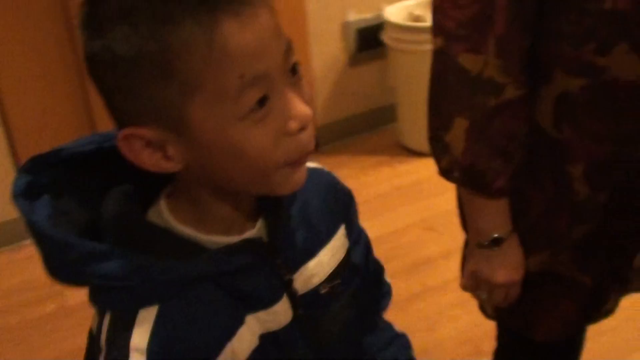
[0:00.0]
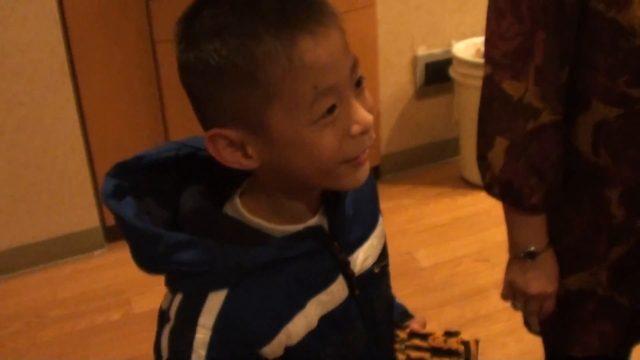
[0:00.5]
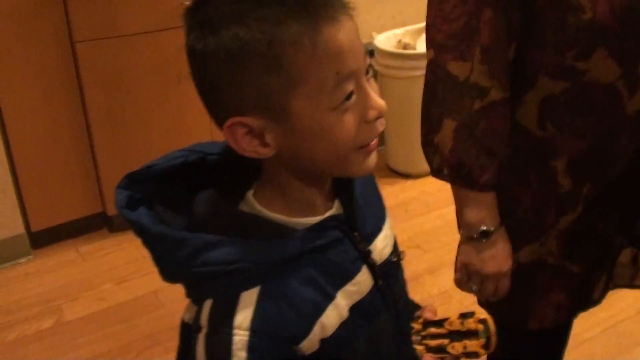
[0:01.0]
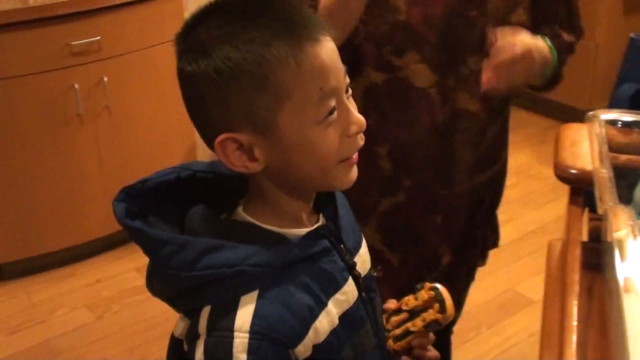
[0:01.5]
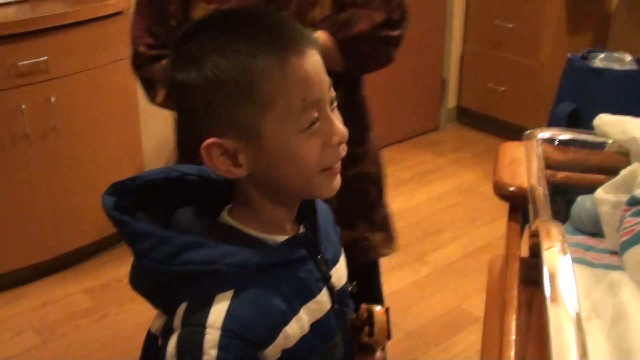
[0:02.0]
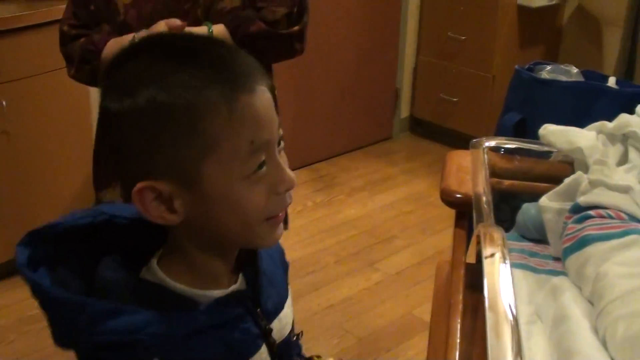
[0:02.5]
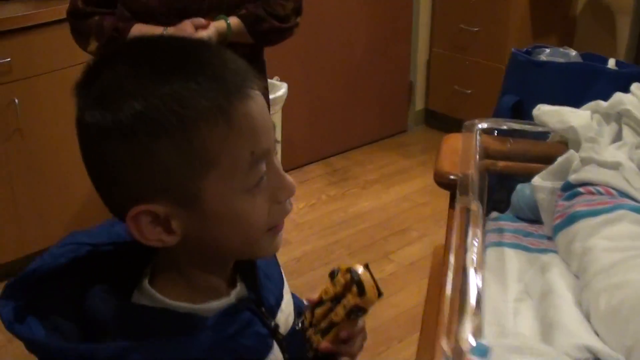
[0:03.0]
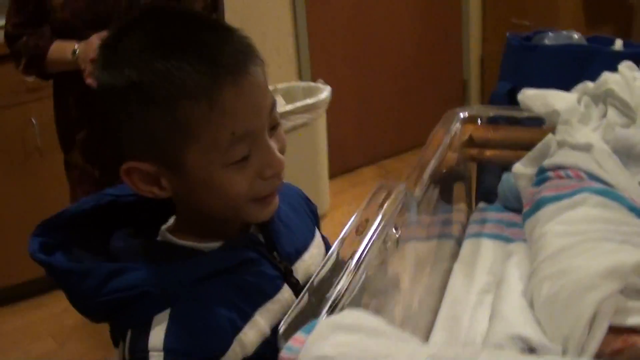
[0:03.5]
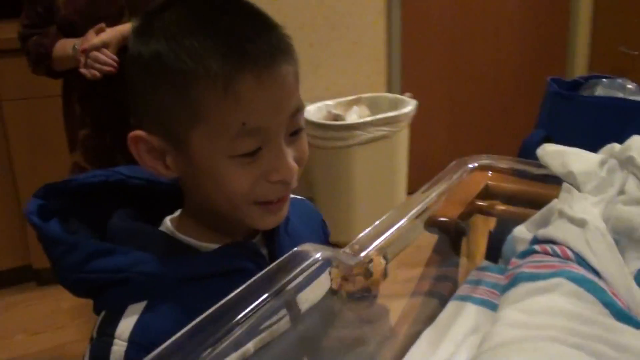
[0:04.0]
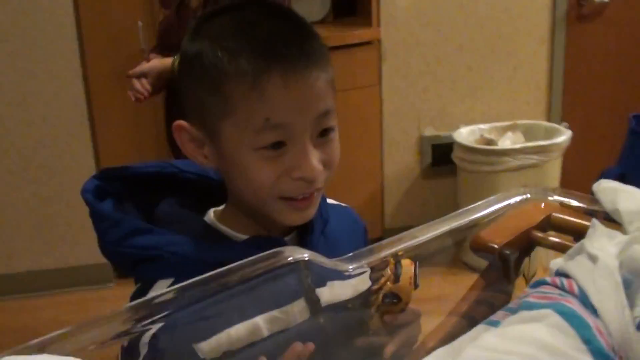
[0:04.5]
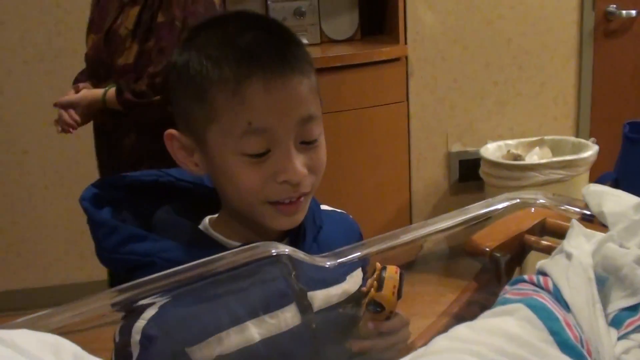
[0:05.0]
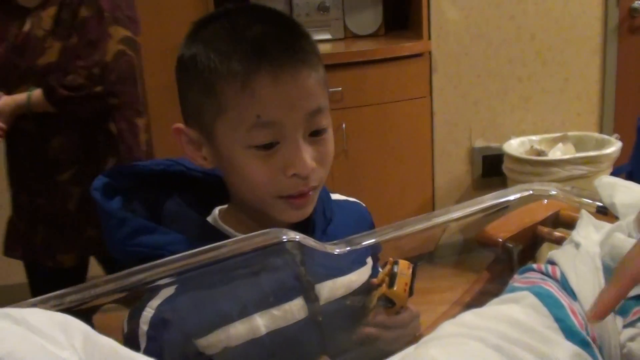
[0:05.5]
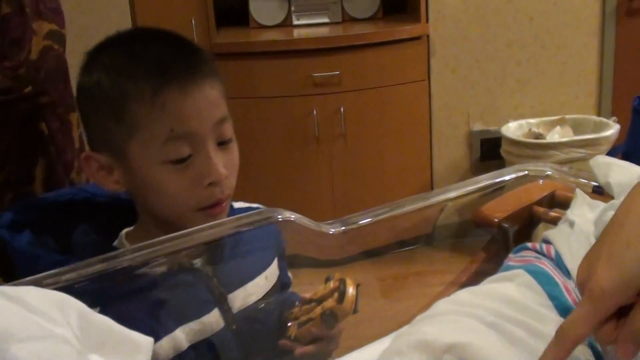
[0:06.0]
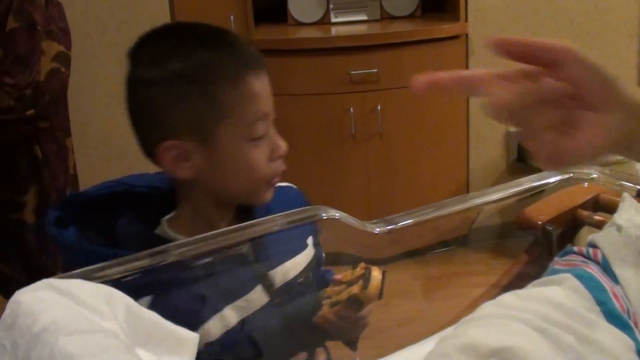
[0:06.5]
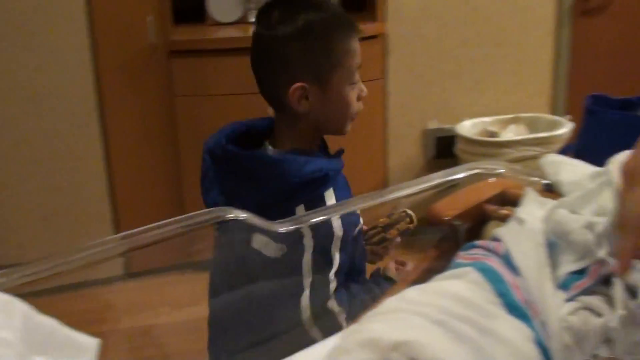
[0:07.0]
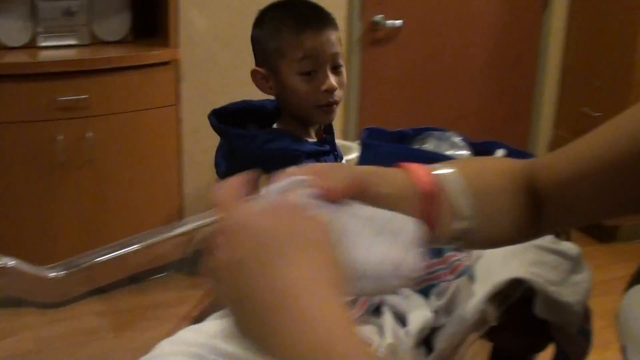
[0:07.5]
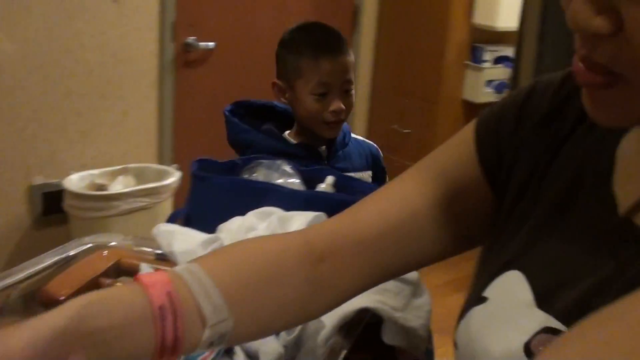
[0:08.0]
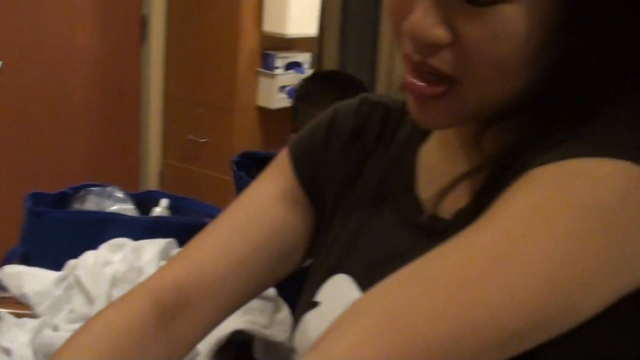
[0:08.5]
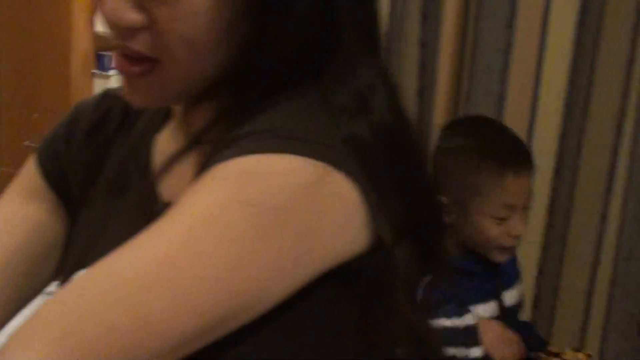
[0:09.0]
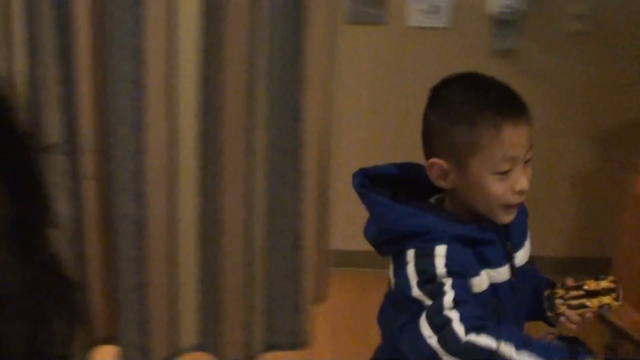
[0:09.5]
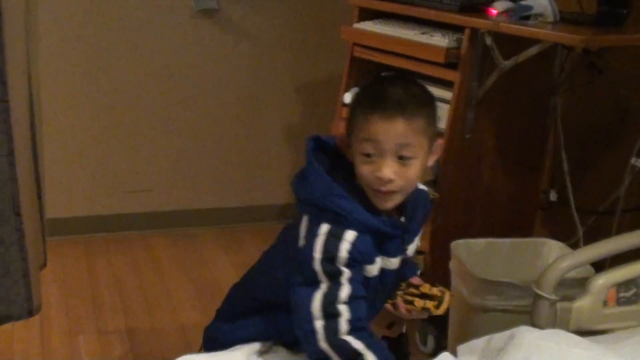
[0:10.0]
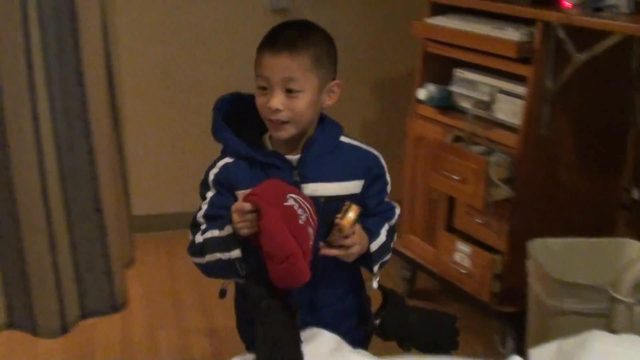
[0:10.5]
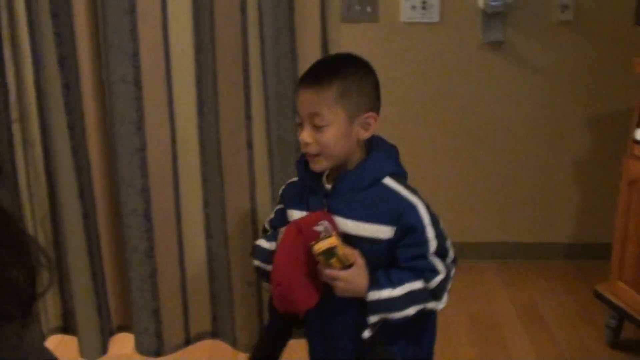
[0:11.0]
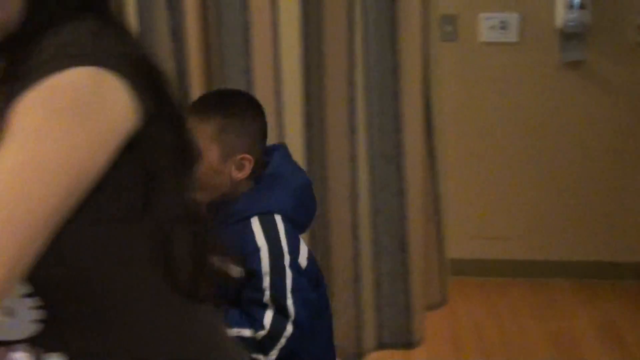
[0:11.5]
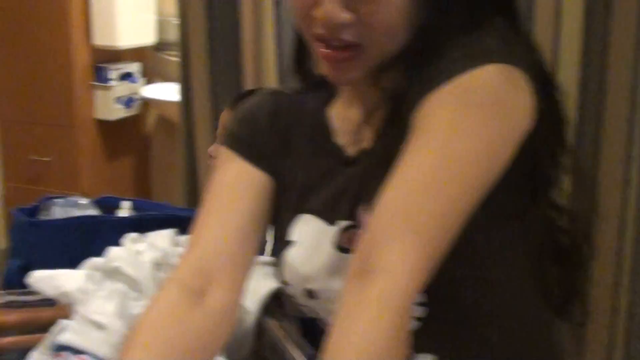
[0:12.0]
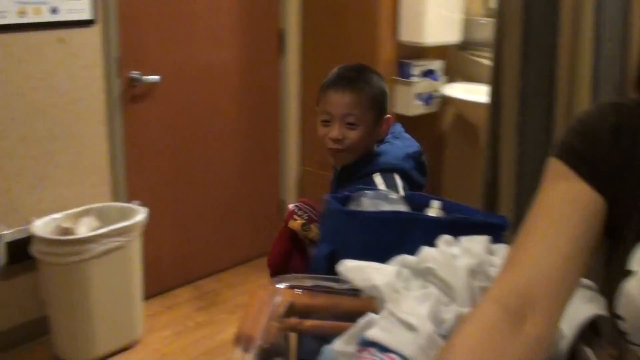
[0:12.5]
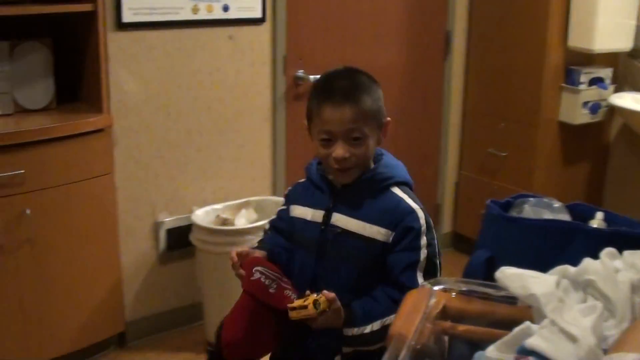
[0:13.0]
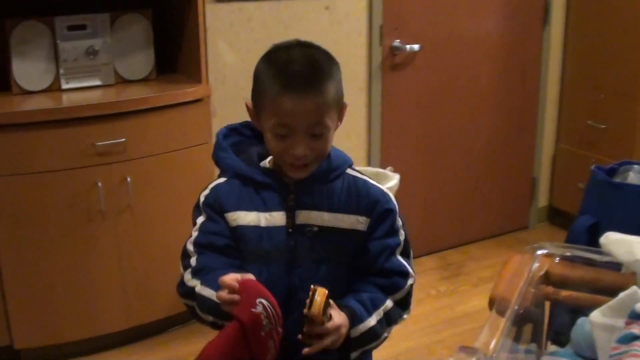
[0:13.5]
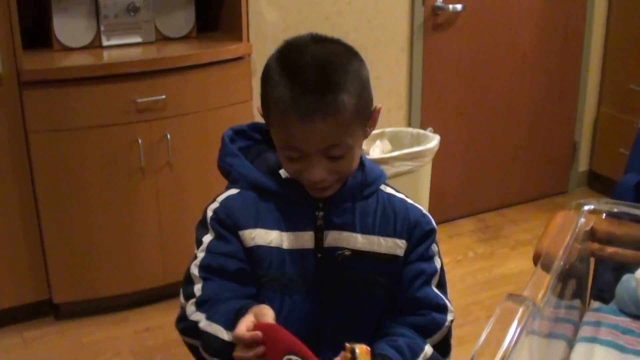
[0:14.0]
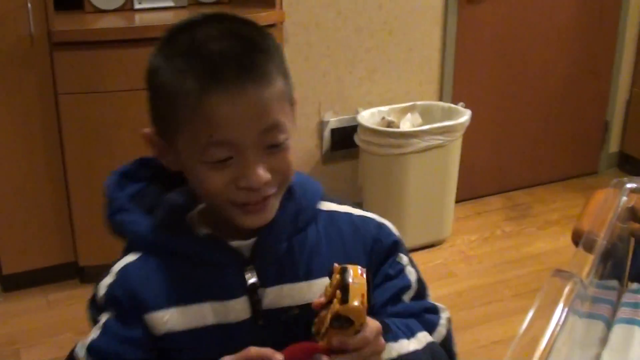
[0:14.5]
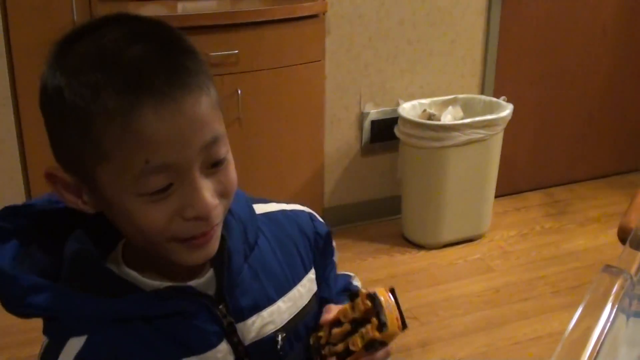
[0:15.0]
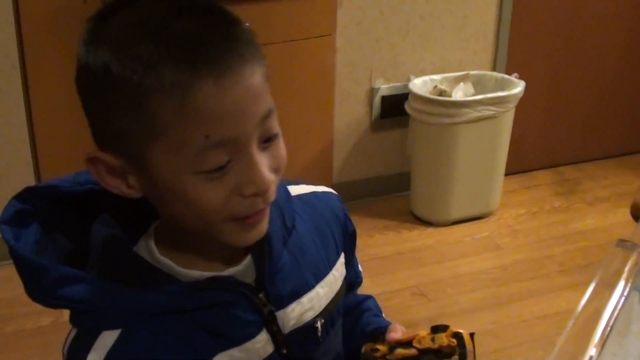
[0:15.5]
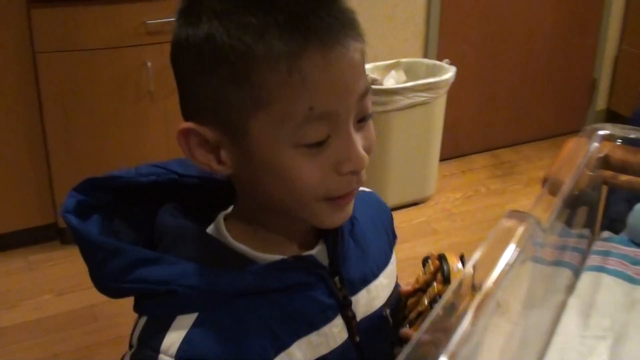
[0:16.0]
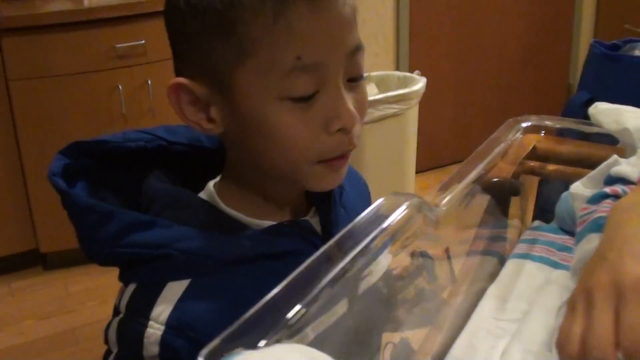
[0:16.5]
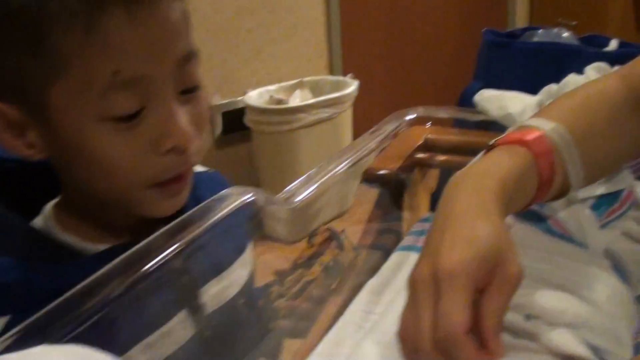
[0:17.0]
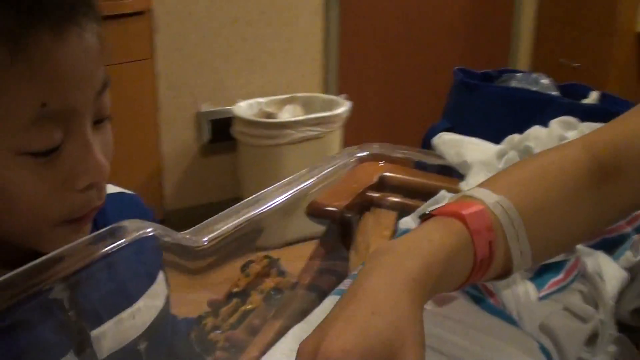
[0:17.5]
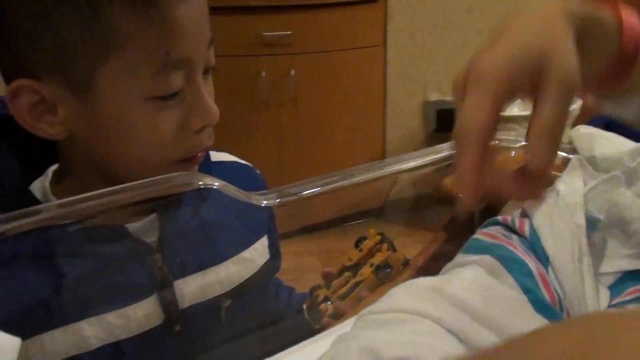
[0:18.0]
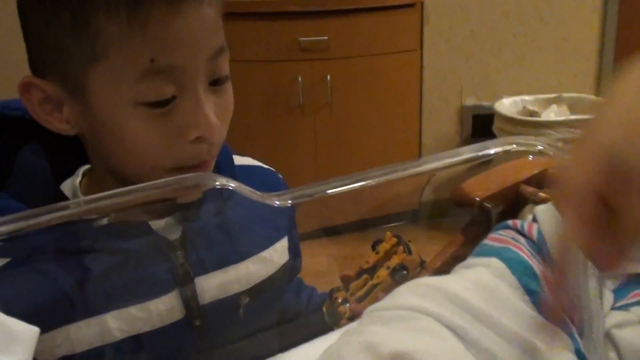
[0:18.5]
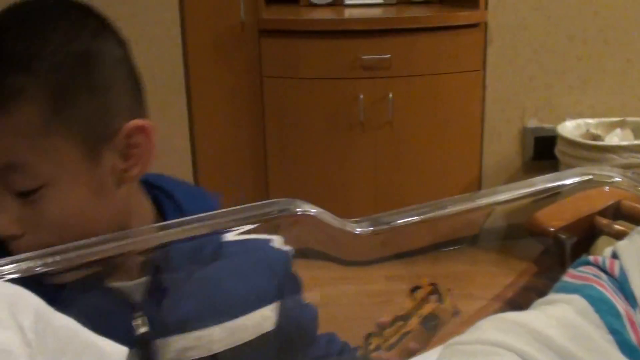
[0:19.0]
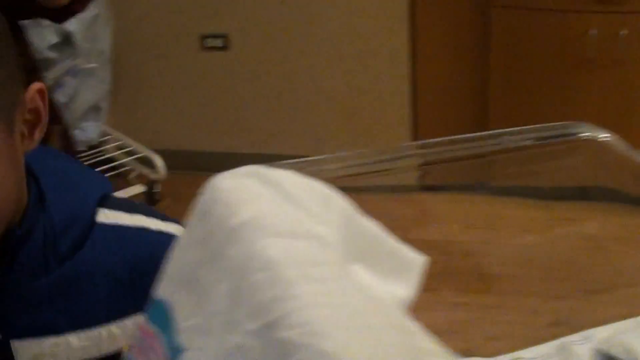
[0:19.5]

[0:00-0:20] A young boy, maybe about five or six years old, wears a blue coat with a hood and looks extremely excited and happy, smiling as he looks up at something. A person next to him, of whom only the body is visible, claps their hands and moves back a bit. What he is looking at is then revealed: a brand new baby in a bassinet in a hospital room. He holds a toy in his hand and looks down inside the bassinet. The person on the other side of the baby gestures to him, so he turns and walks around to the other side of the bassinet, staring at the baby the whole time with a big smile on his face. He grabs a red hat off a chair, goes back around to the other side, and looks down at the baby. The person, possibly the mother, points at him and gestures again, and he turns to go around the bassinet to the other side.